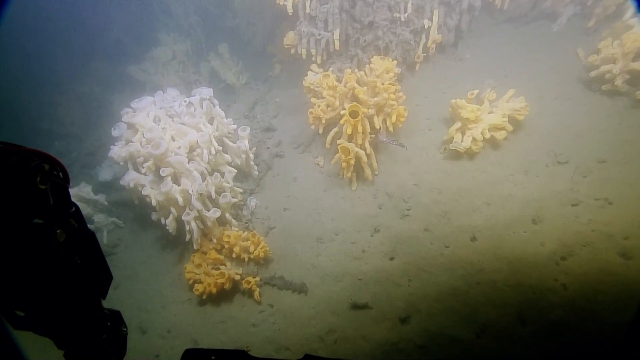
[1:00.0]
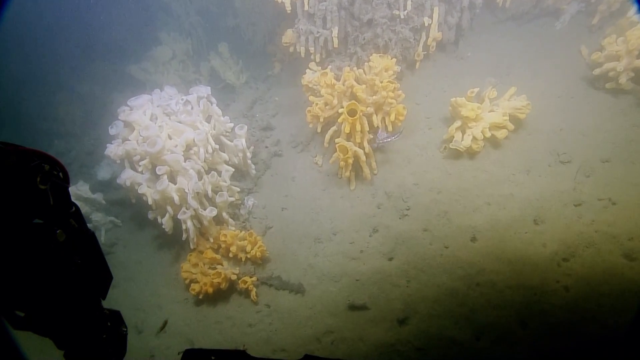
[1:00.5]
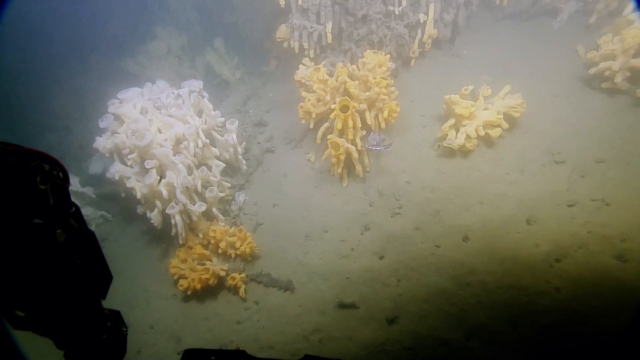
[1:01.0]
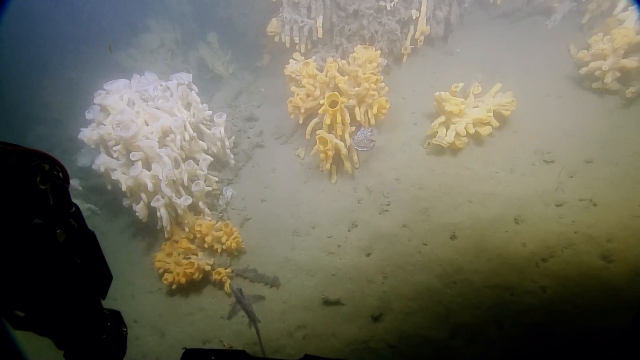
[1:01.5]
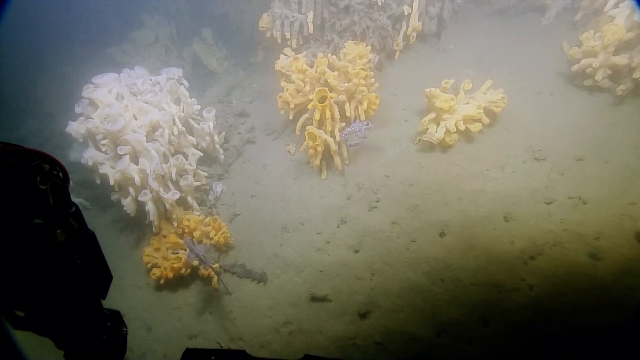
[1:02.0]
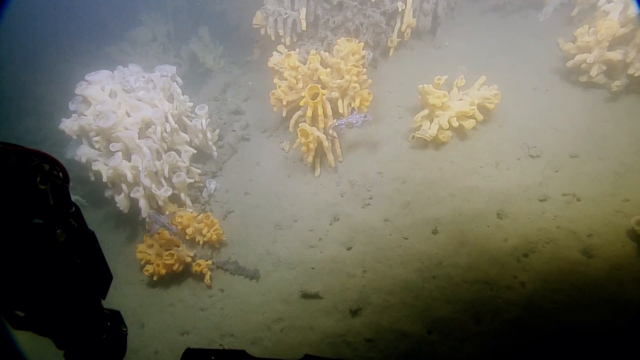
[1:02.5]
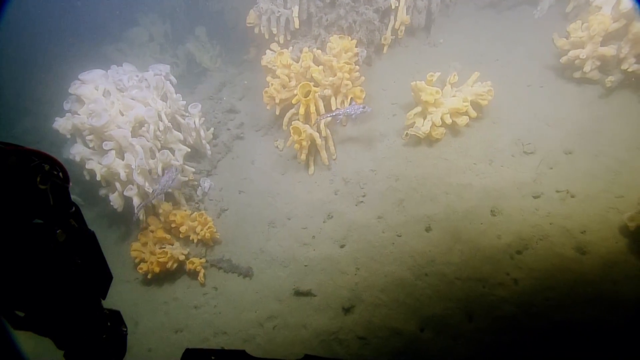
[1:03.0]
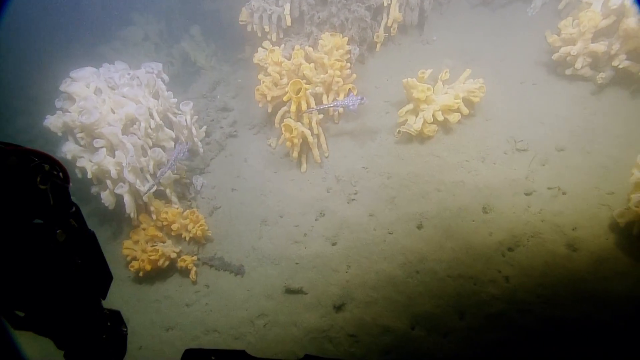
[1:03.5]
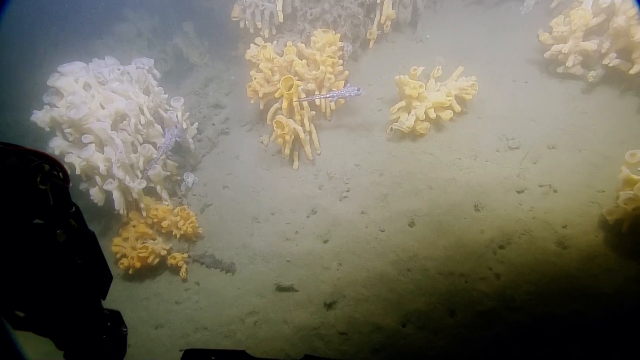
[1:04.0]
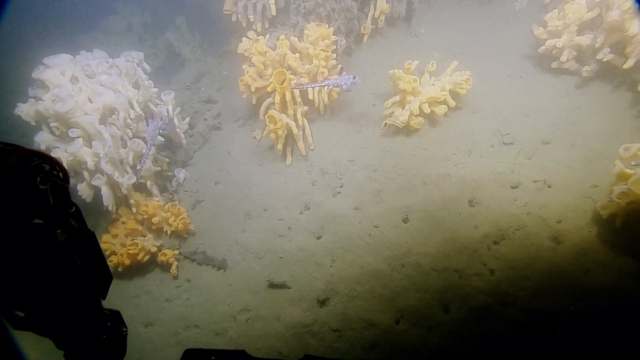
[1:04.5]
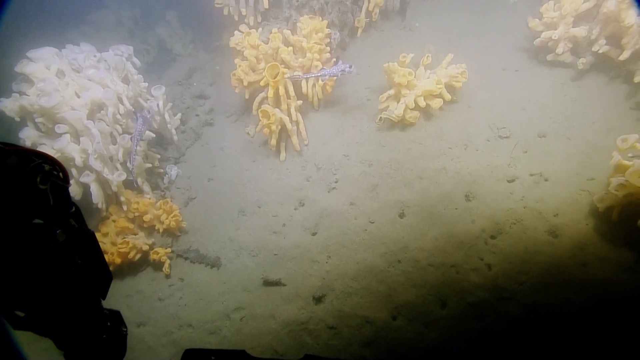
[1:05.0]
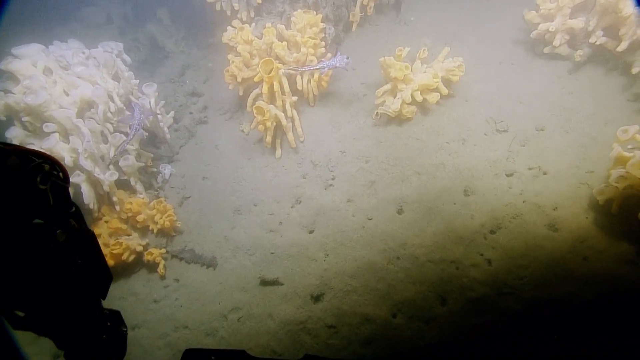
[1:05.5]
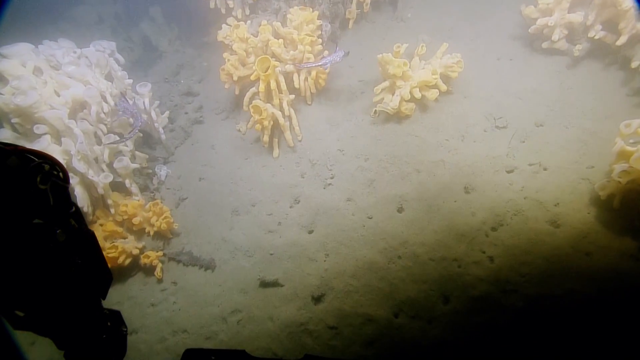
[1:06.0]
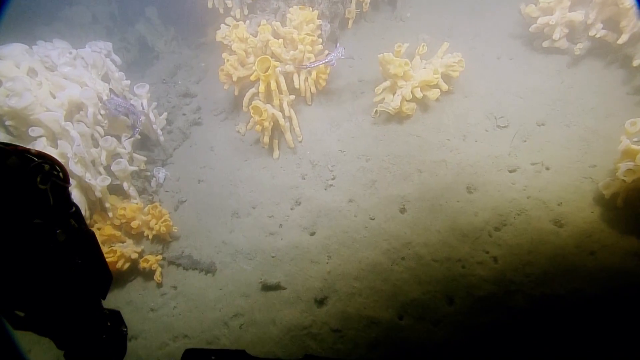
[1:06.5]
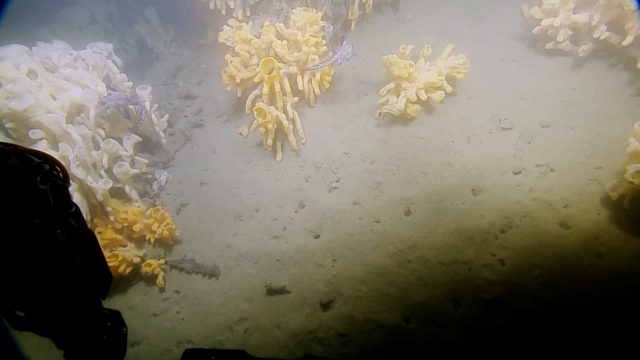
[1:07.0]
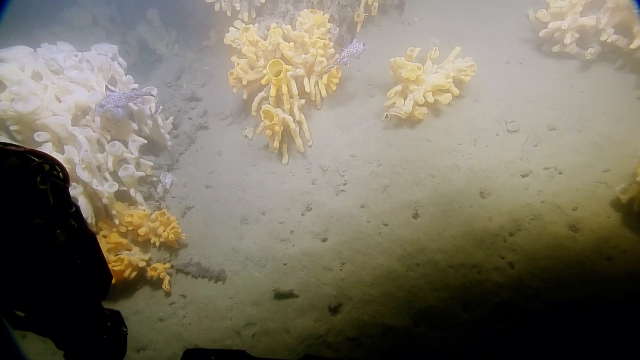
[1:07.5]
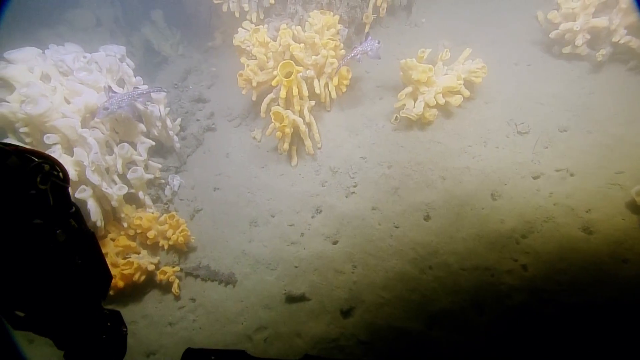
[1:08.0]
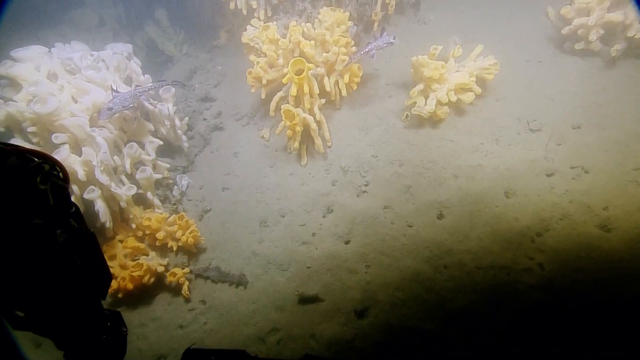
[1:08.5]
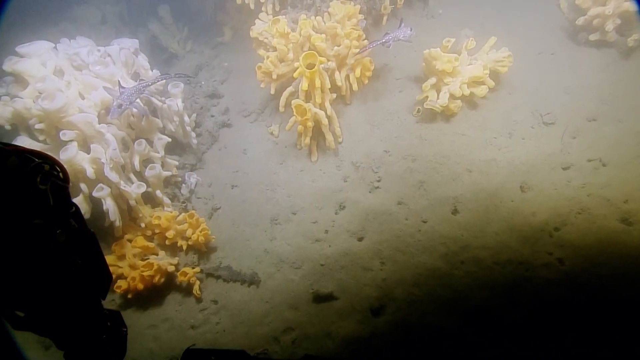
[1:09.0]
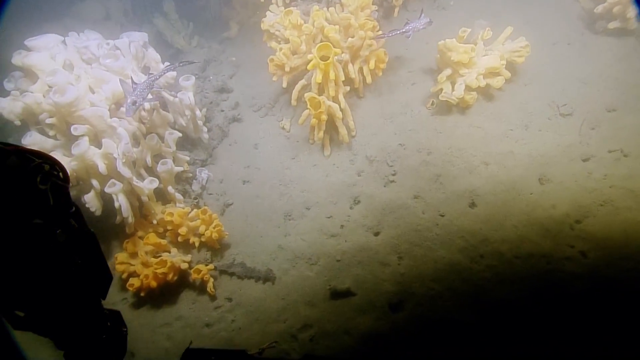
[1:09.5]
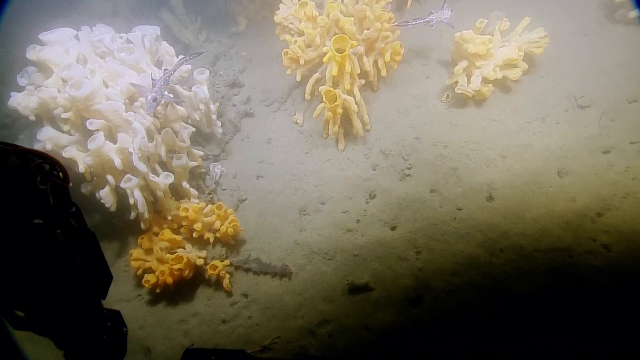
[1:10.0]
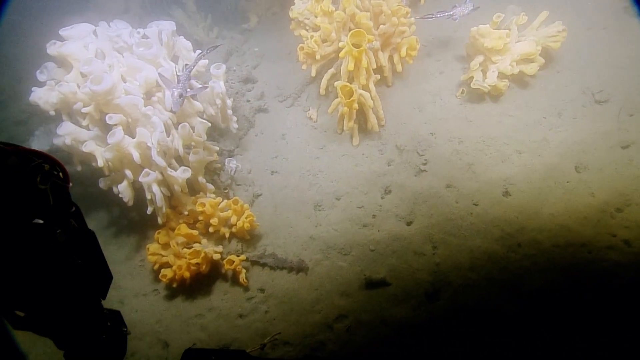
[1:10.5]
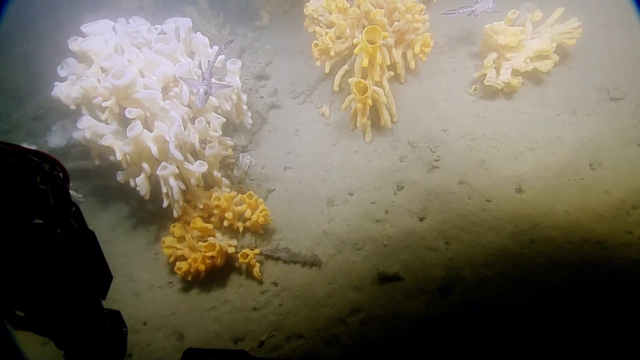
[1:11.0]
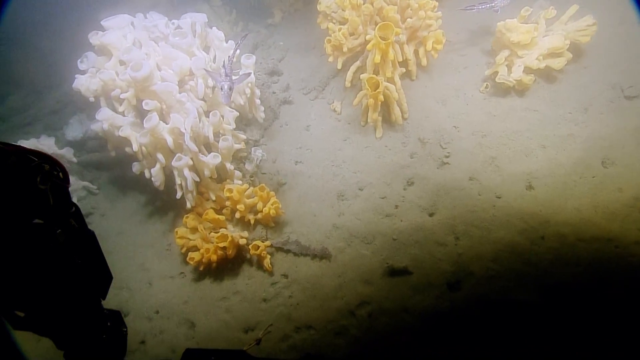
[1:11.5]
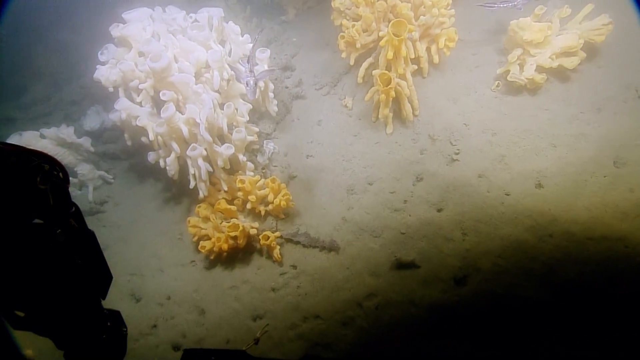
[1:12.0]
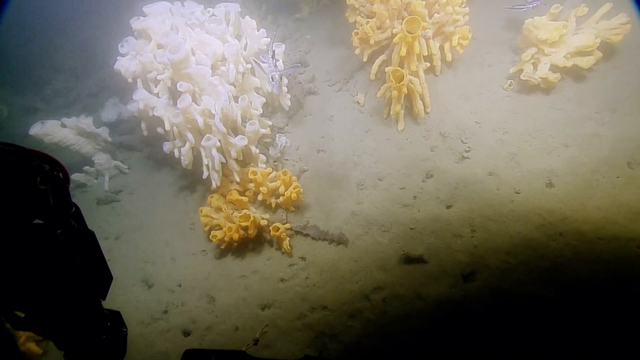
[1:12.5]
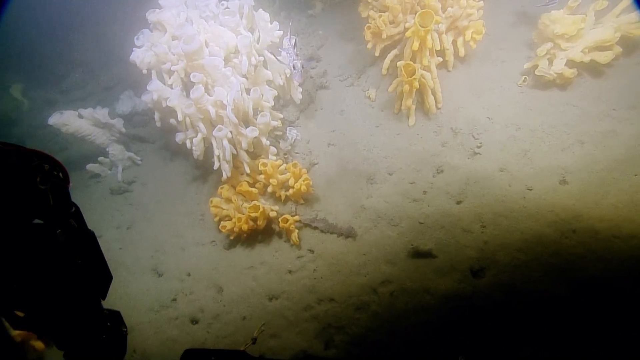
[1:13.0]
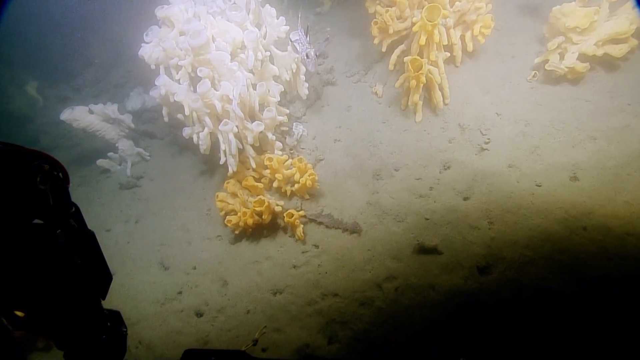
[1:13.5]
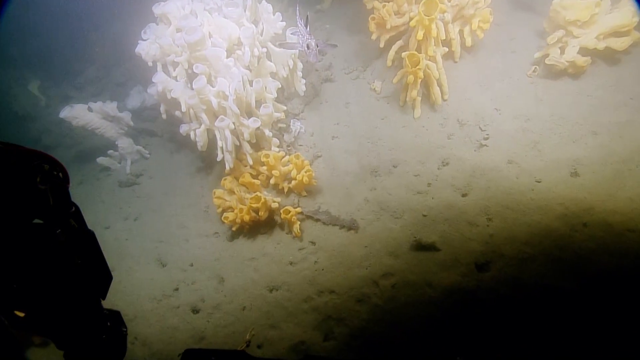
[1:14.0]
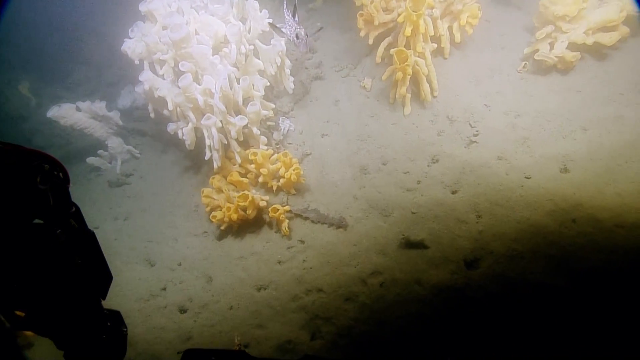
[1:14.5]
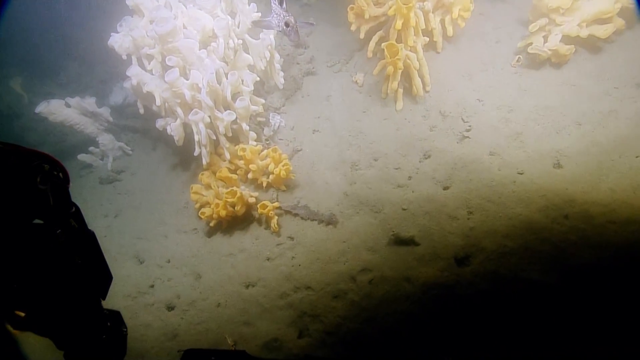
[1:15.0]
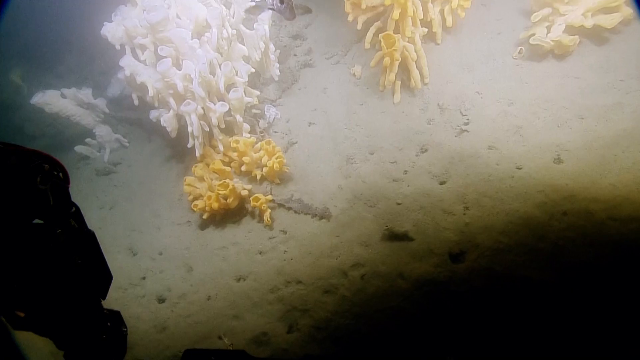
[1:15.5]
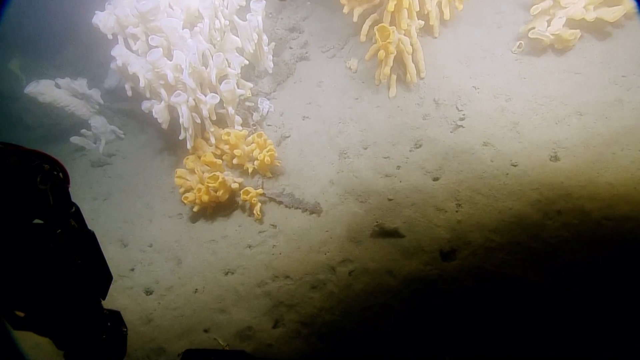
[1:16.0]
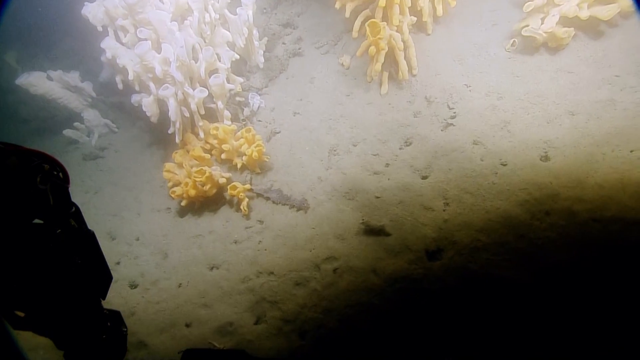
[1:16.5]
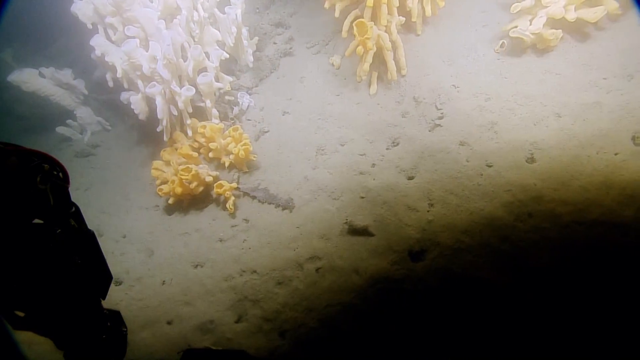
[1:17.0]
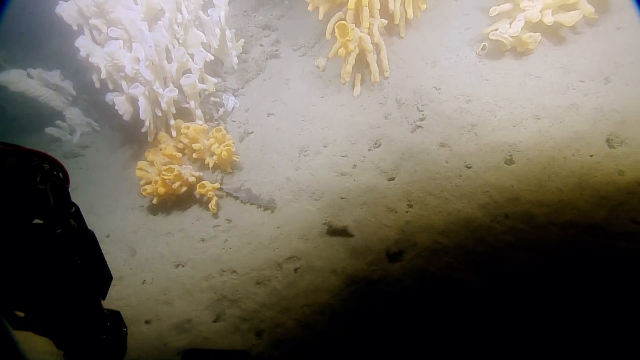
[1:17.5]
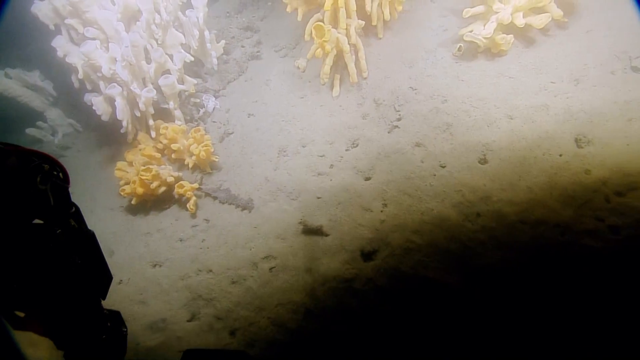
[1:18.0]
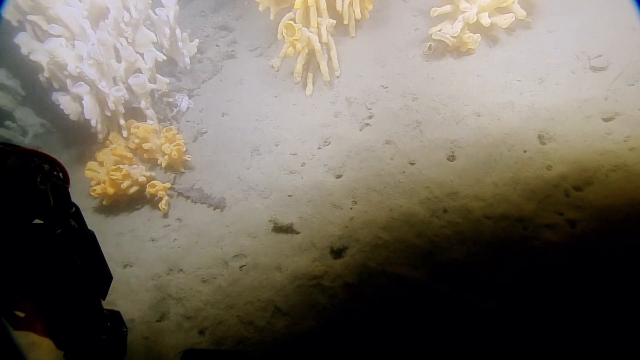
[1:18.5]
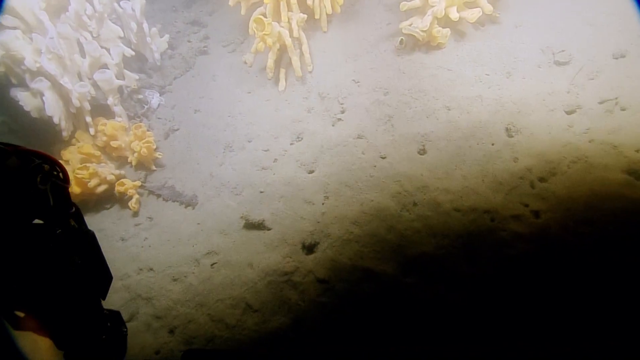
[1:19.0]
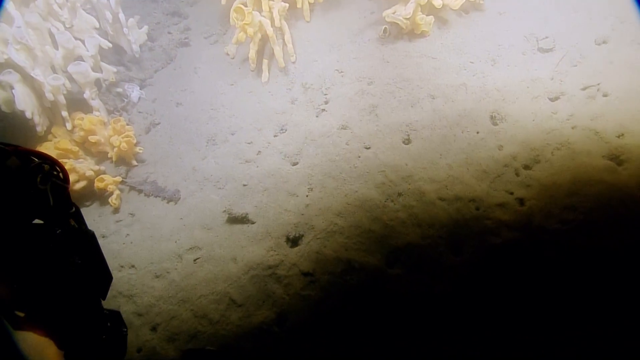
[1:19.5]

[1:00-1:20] The live feed shows three large pieces of coral in the center of the screen: a large white one on the left, a light orange one in the middle, and a smaller off-white one on the right, with sand dividing them. A little fish that looks like a baby shark swims around the light orange coral. The camera pans a little to the right, following the baby shark as it swims around the larger white coral on the left part of the screen. The camera zooms in toward the fish, getting closer, showing detail of the fish on the left near the large white coral. The camera then zooms in more toward the sand. The sand is white, and the shadow of the submarine is black at the bottom of the screen.